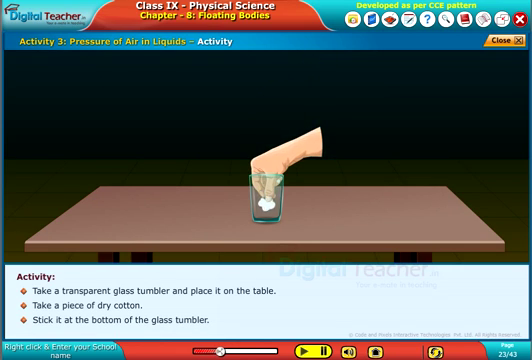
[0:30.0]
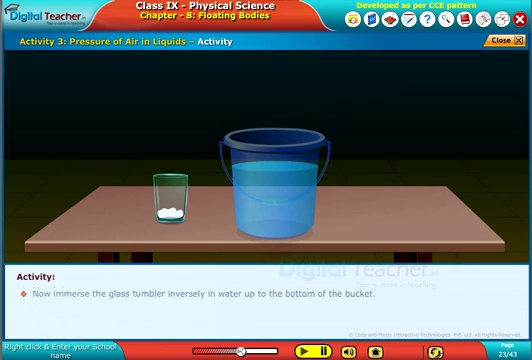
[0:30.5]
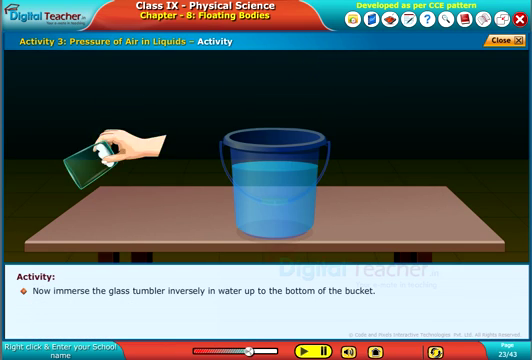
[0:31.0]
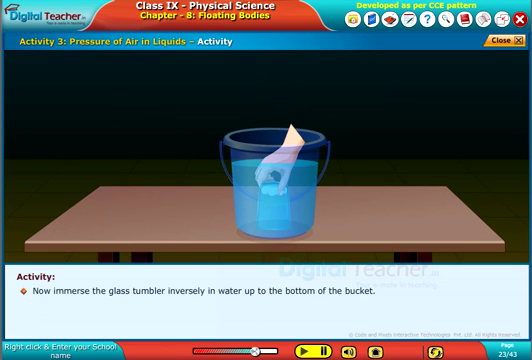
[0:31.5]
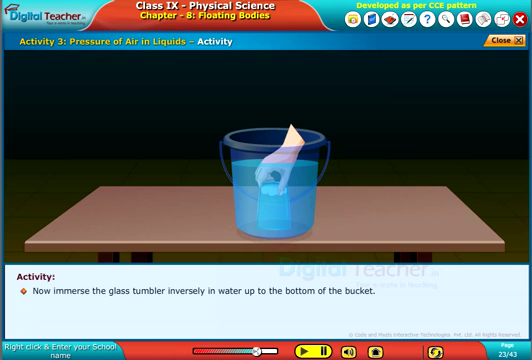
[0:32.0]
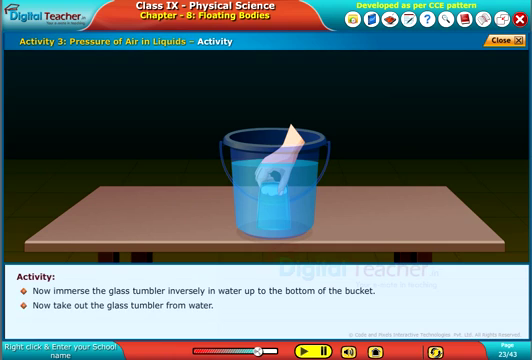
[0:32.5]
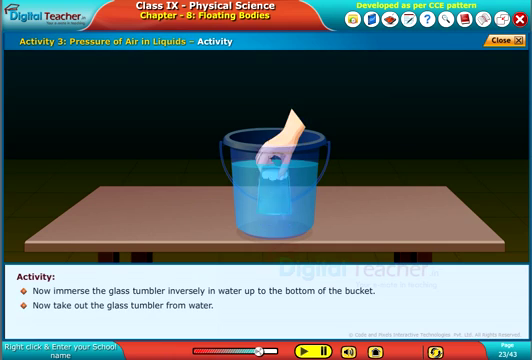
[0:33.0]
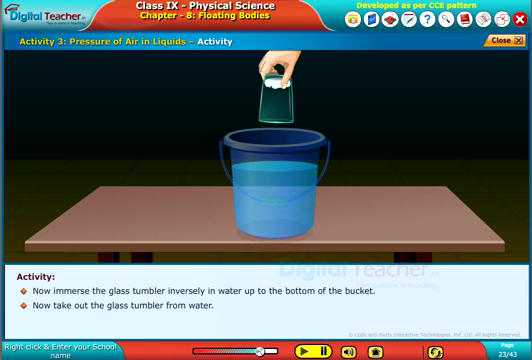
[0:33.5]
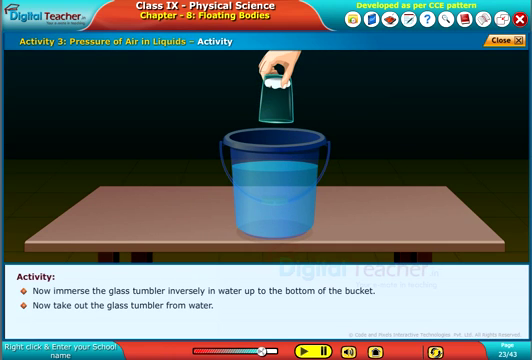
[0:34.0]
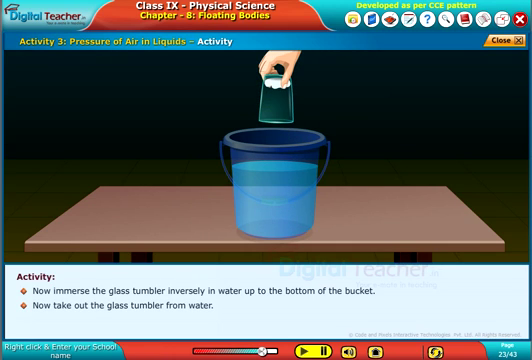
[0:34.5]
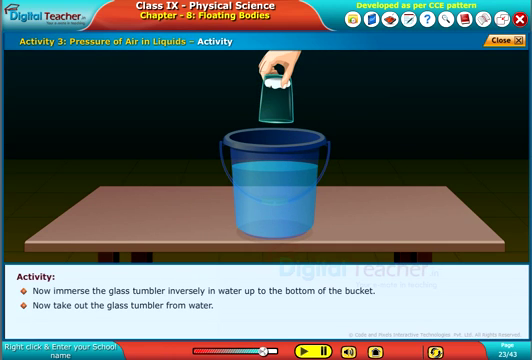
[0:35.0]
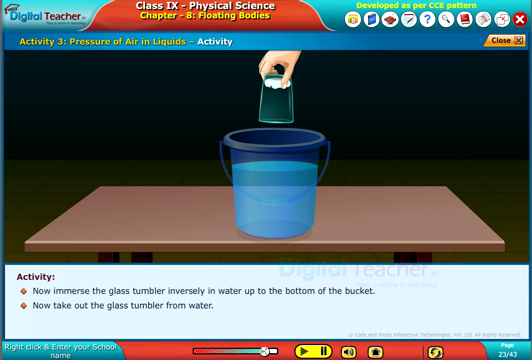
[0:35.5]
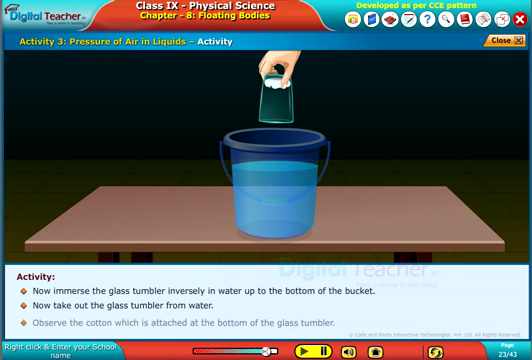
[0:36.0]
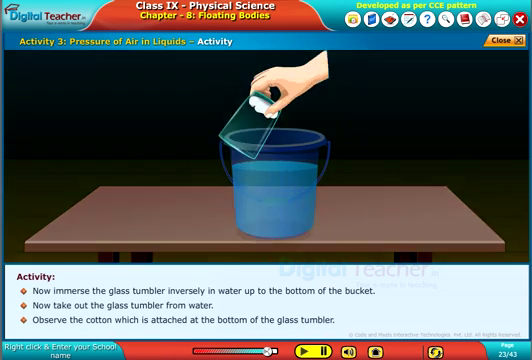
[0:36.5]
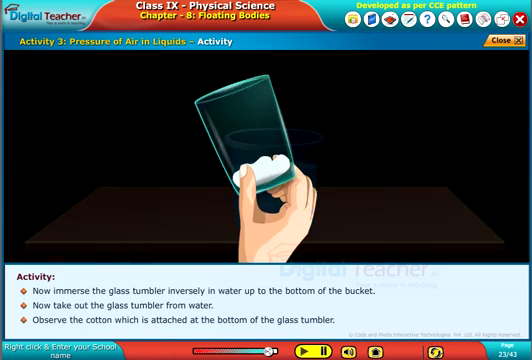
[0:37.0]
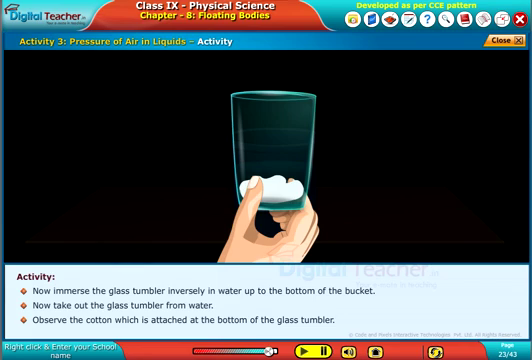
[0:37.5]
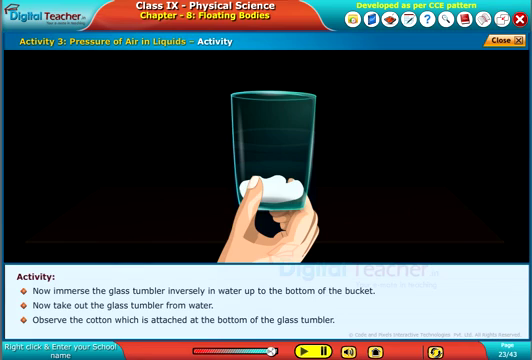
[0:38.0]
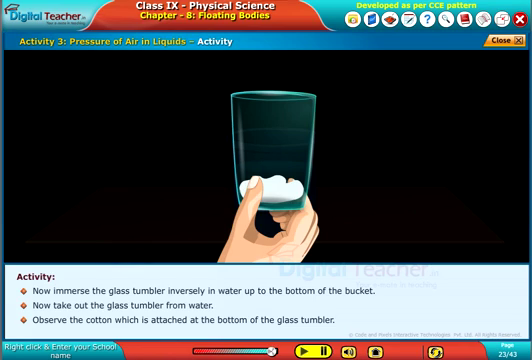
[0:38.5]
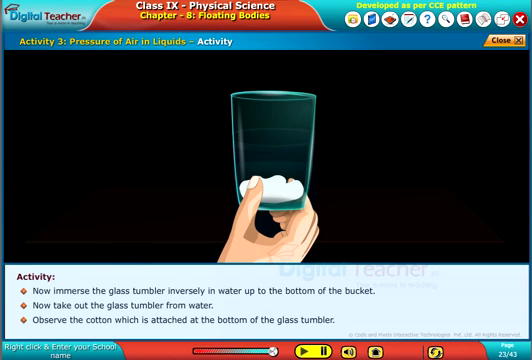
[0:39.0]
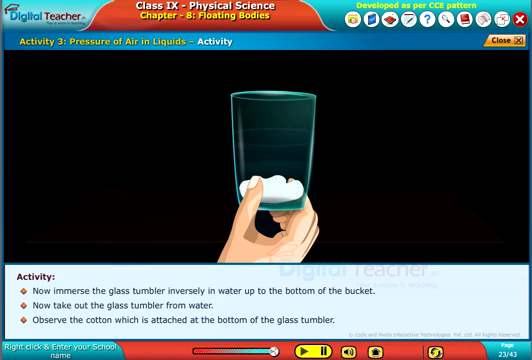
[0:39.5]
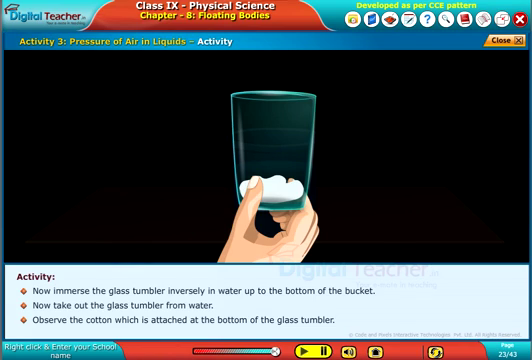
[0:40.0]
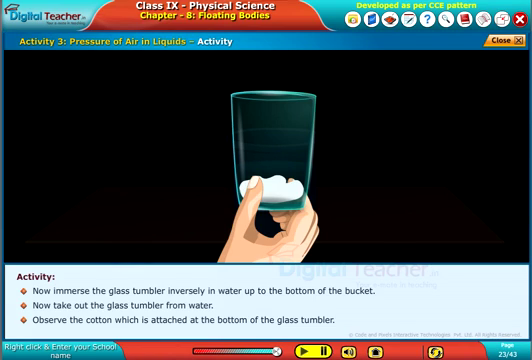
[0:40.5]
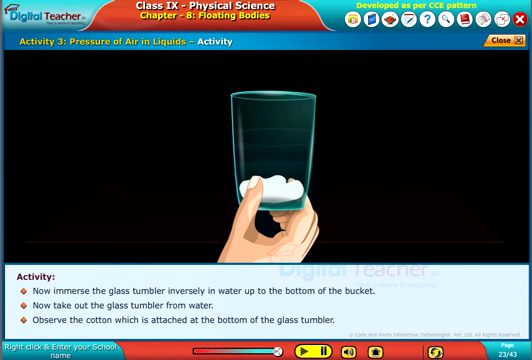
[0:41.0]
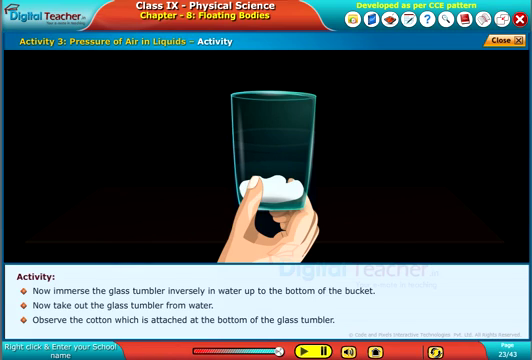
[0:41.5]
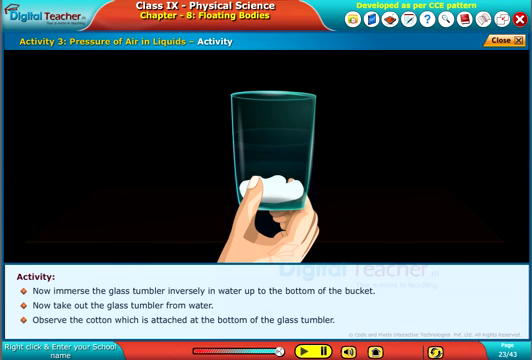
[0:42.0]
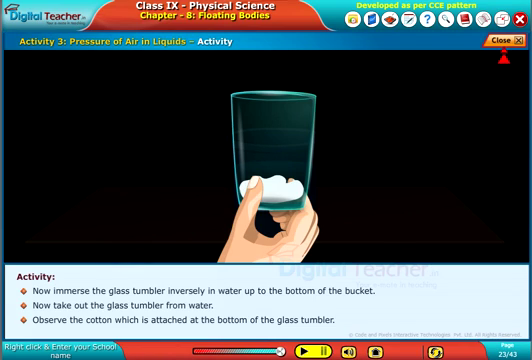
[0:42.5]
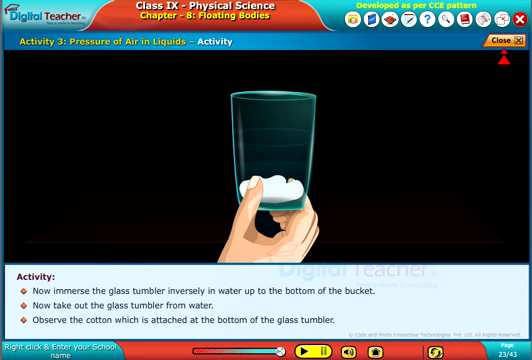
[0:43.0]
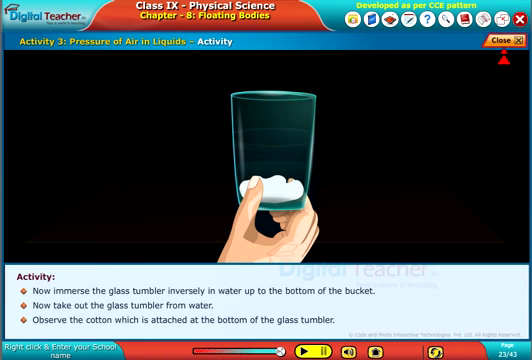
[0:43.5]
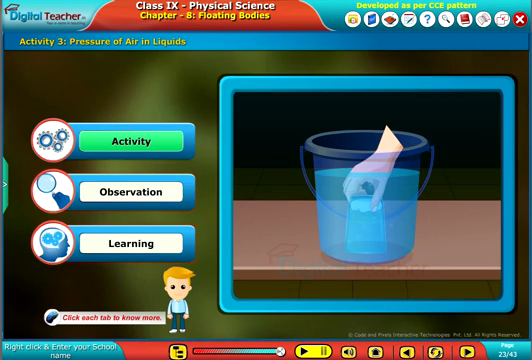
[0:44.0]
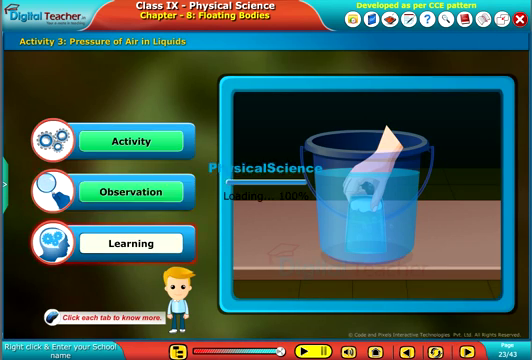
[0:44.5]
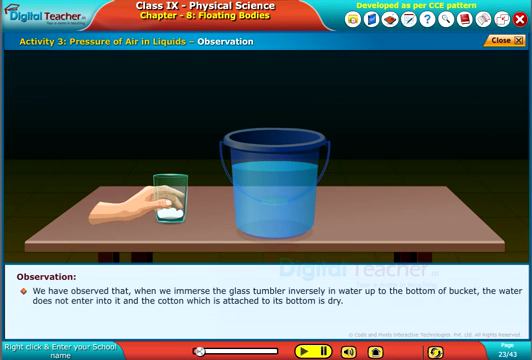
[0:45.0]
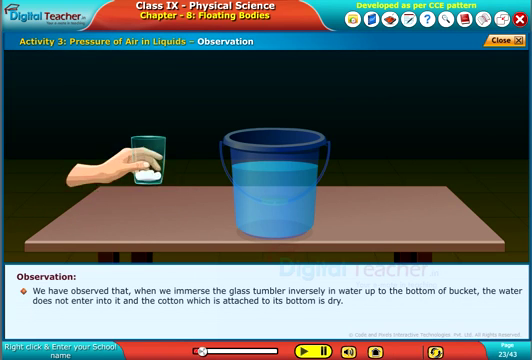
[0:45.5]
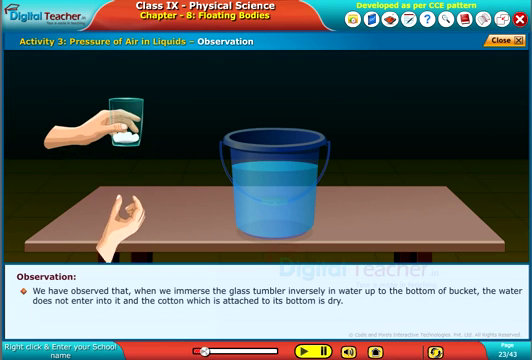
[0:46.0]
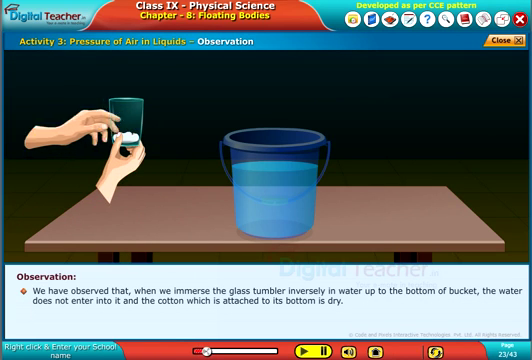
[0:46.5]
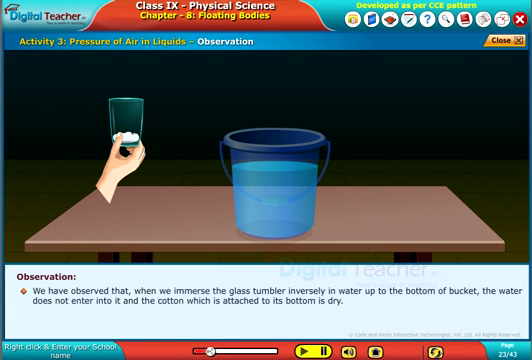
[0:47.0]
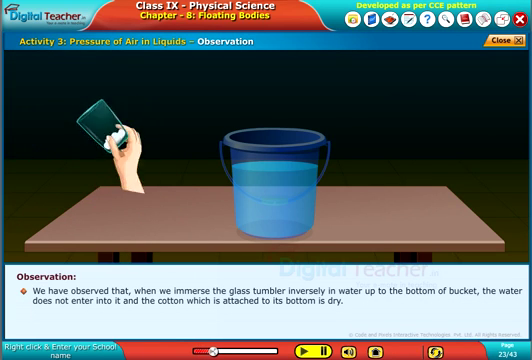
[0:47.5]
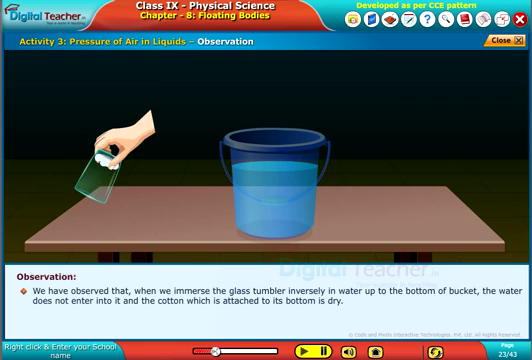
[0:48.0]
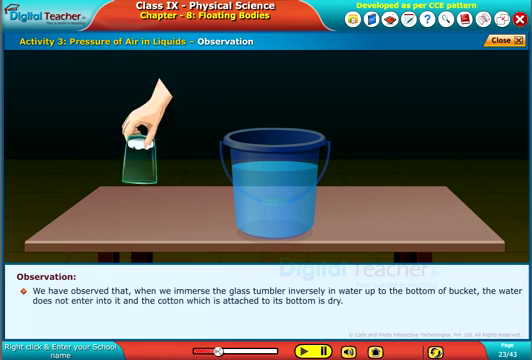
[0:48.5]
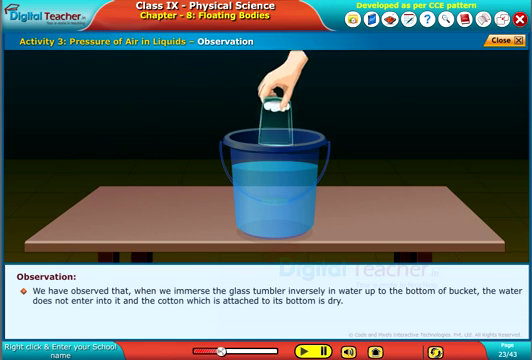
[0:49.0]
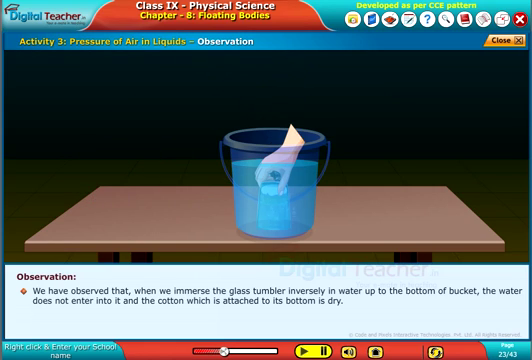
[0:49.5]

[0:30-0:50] The activity steps continue: the first is to take a transparent glass tumbler and place it on a table, and the hand does so; next the hand takes a piece of dry cotton and sticks it at the bottom of the glass tumbler. A transparent bucket of water is taken, and a second hand reaches toward the water bucket. He puts the water bucket on the table, lifts the glass tumbler and immerses it in the water up to the bottom of the bucket. The next step is to take the glass tumbler out of the water, which he does, and the cotton attached at the bottom of the tumbler is observed. The activity option then lights up green, indicating it is completed. Observation is clicked next, showing text stating that when the glass tumbler is immersed in the water up to the bottom of the bucket, the water does not enter it and the cotton attached at the bottom is dry, while the whole experiment replays.